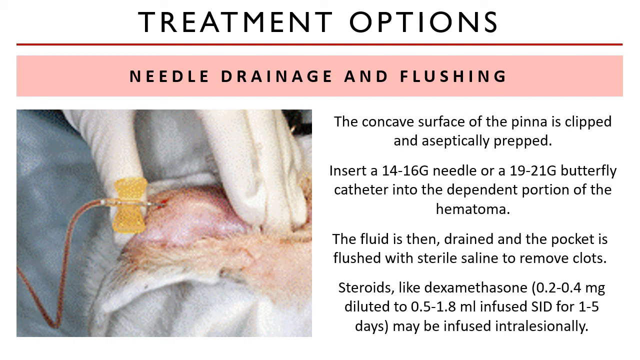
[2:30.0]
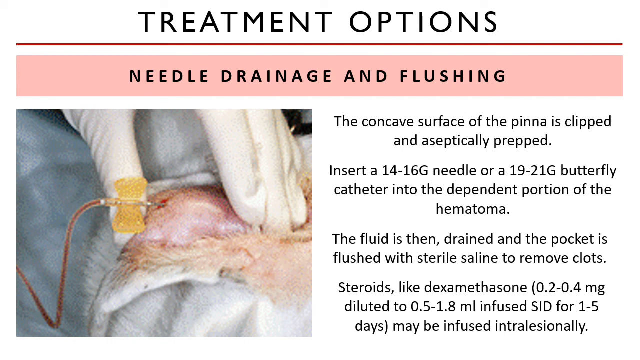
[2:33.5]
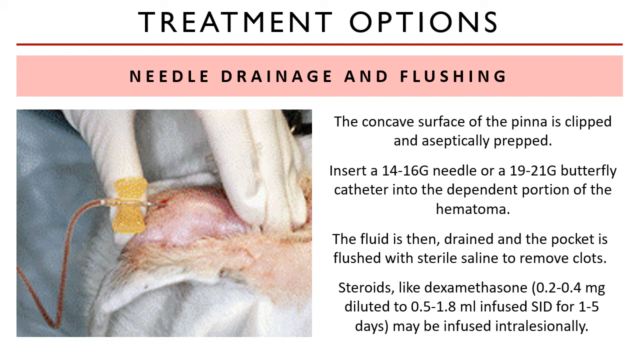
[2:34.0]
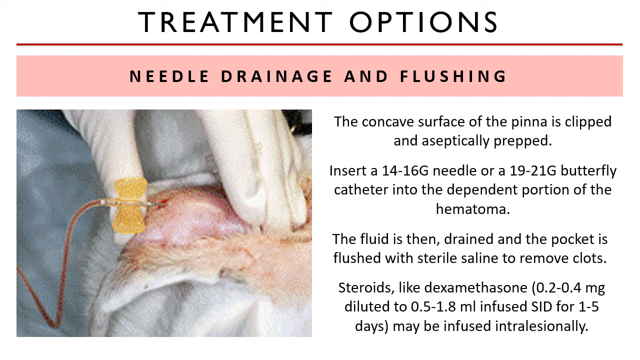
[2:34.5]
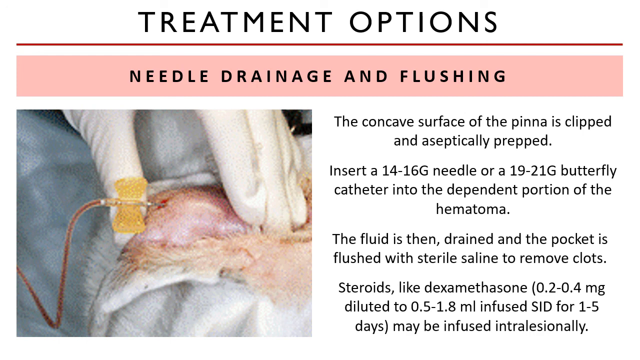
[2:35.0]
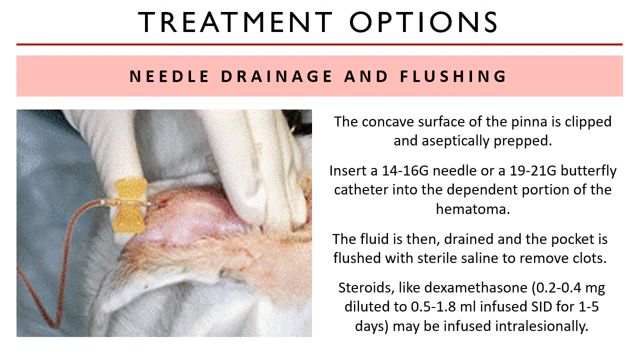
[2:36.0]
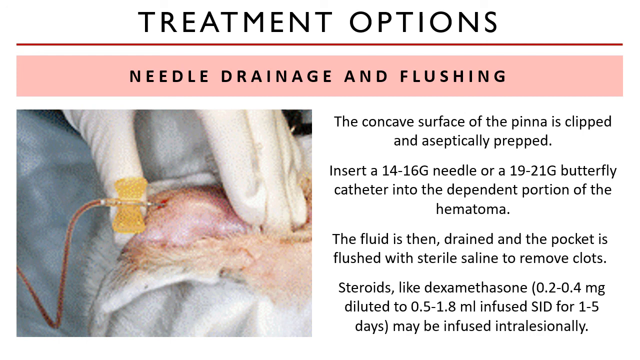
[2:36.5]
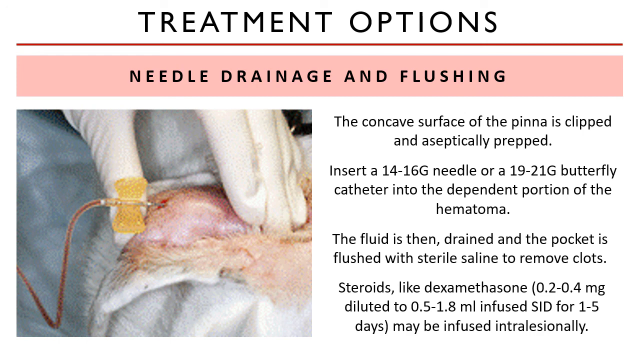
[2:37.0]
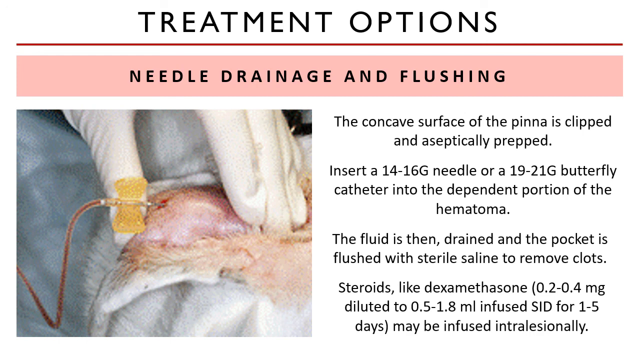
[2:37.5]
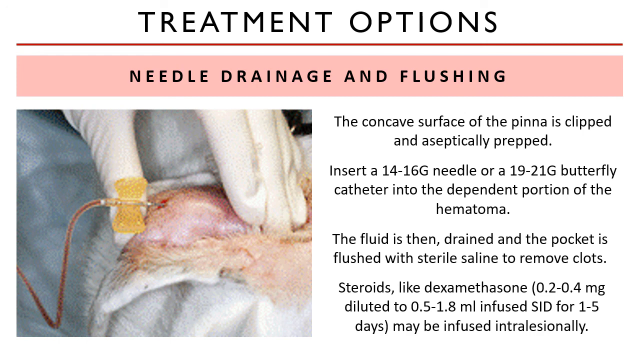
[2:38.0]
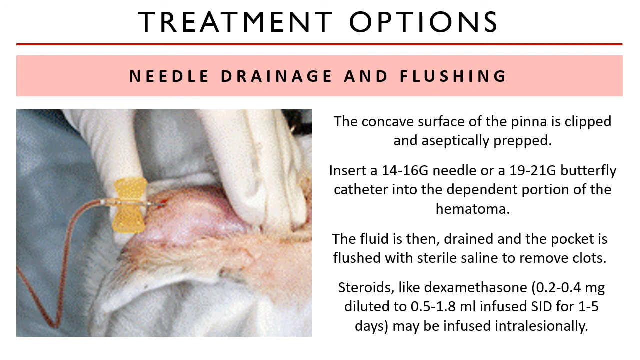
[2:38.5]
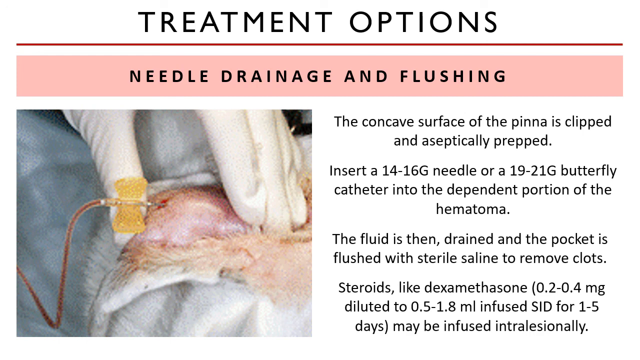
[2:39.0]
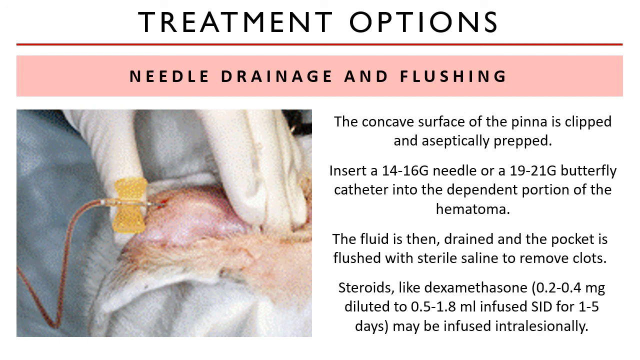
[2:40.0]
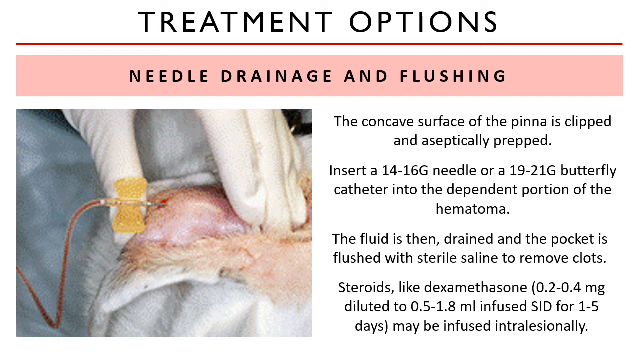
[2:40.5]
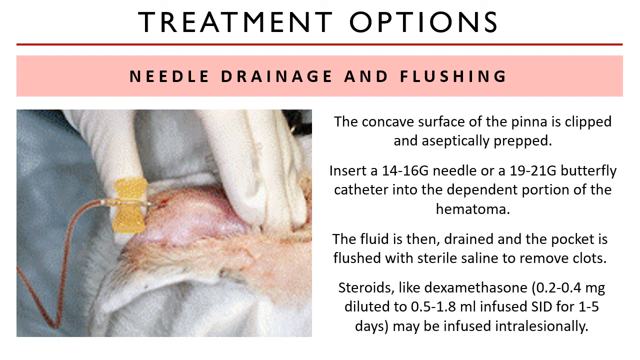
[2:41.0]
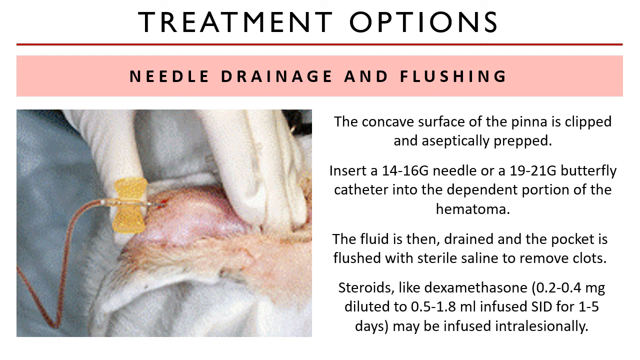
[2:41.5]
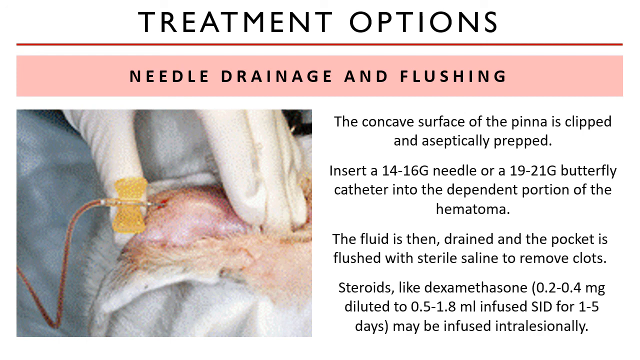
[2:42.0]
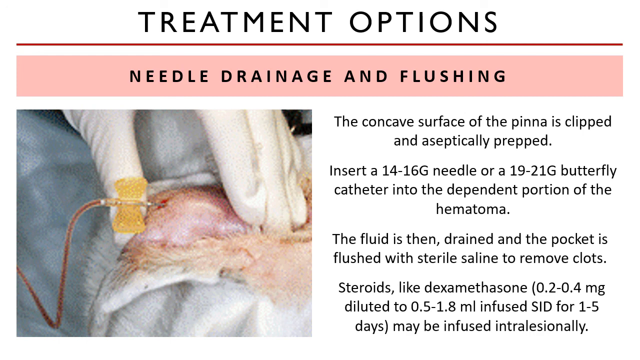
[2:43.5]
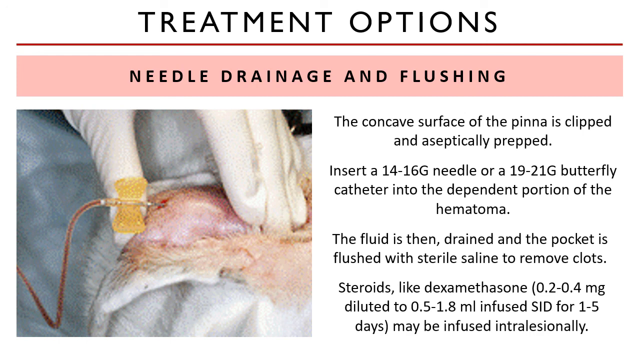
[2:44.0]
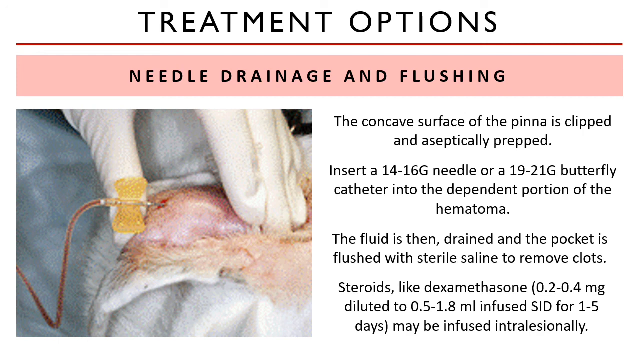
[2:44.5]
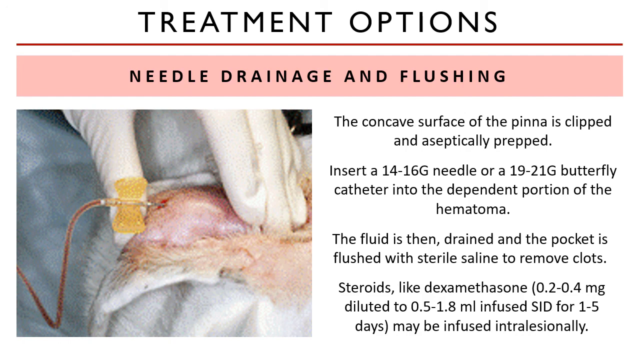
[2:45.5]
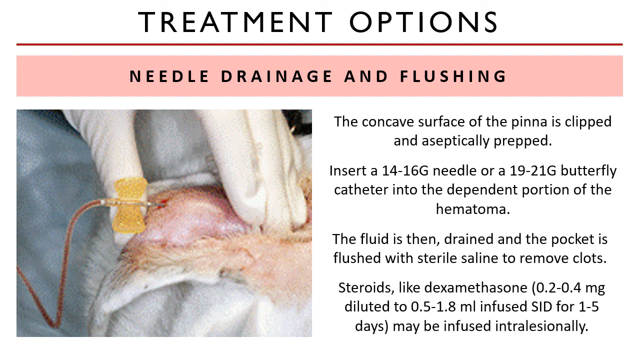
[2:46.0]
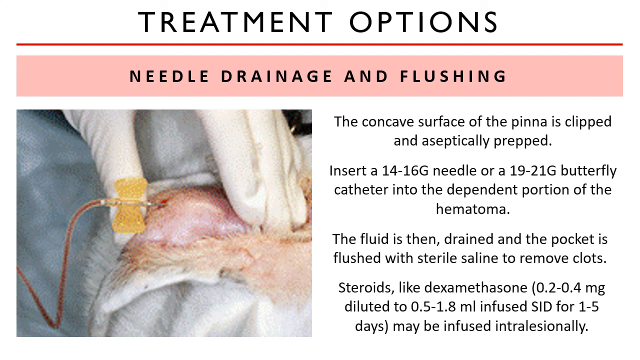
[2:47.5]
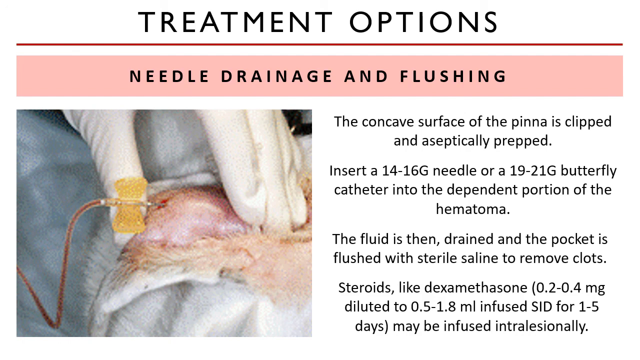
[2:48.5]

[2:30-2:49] Everything at the top is the same: in black, not bold, it reads "treatment options," followed by a little white space, a red line that seems to separate the sections, white space again, and a pink area with black capital letters reading "drainage and flushing." Nothing seems to change in the image; the slide just holds the words "the concave surface of the PINNA is clipped" and "aseptically prepped," "insert 14-16 g needle or 19-21 butterfly catheter into the dependent portion of the hematoma," "the pocket is flushed with sterile saline to remove the clots," and text saying steroids like dexamethasone can be used and "may be infused intralesionally."